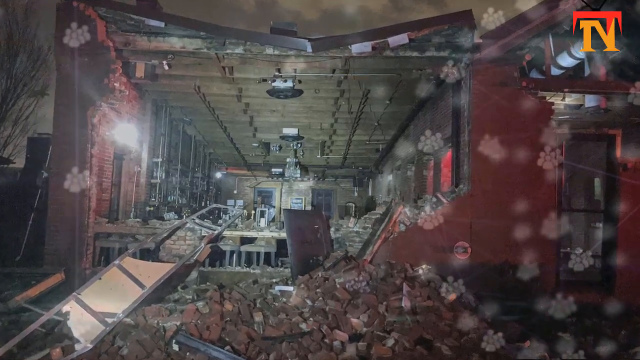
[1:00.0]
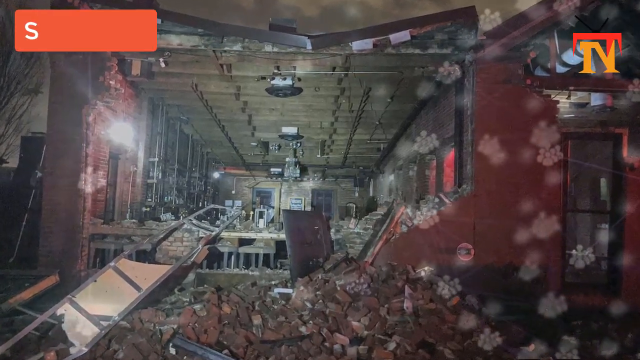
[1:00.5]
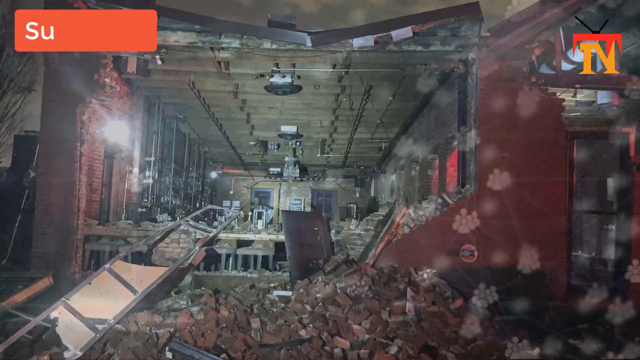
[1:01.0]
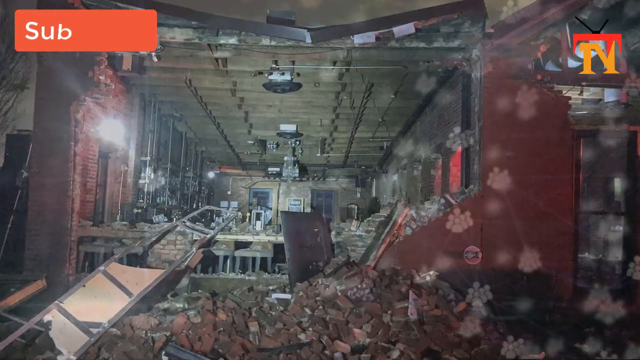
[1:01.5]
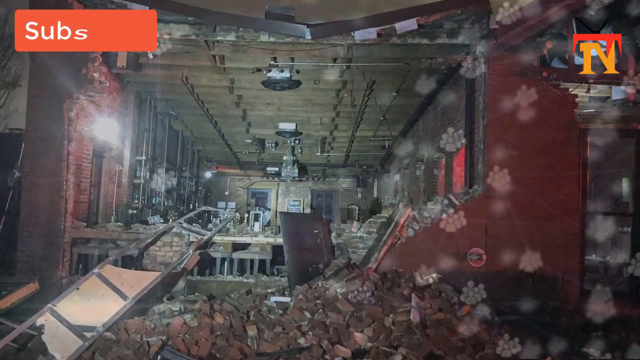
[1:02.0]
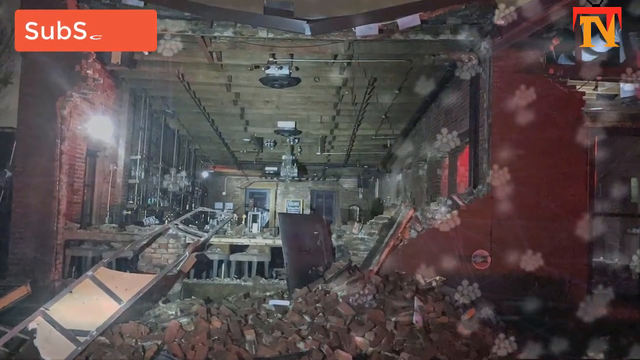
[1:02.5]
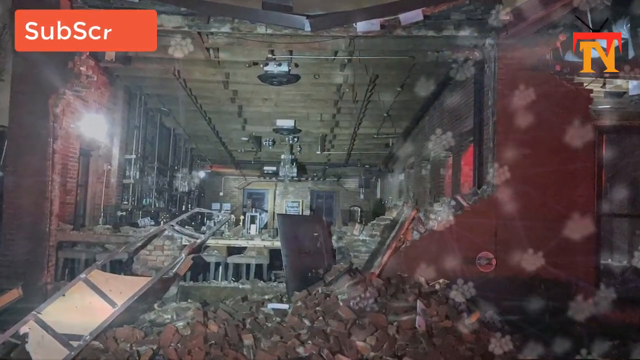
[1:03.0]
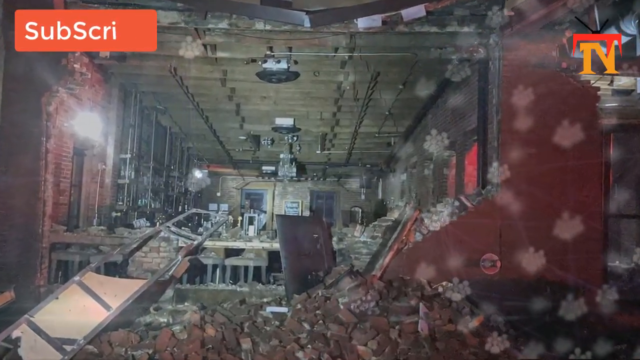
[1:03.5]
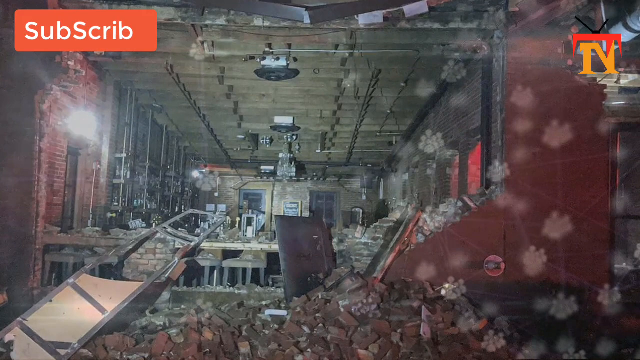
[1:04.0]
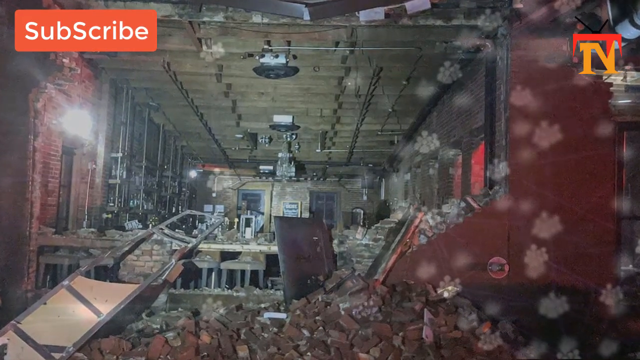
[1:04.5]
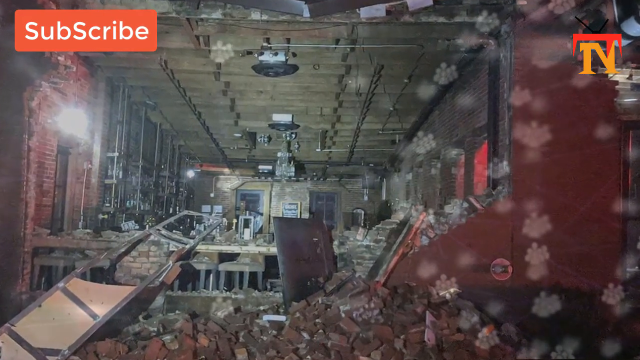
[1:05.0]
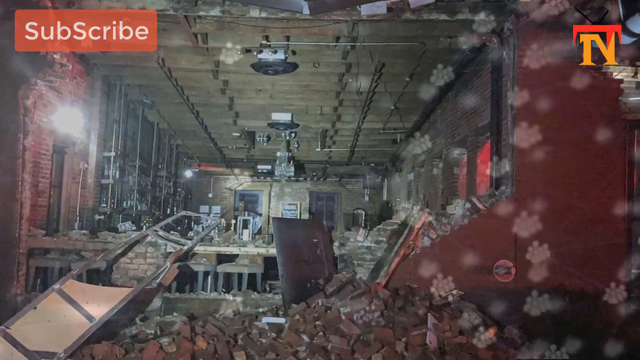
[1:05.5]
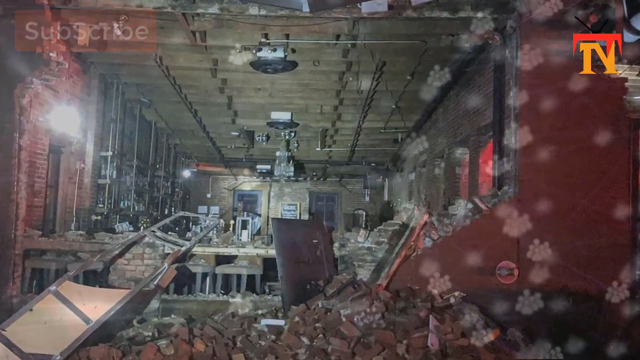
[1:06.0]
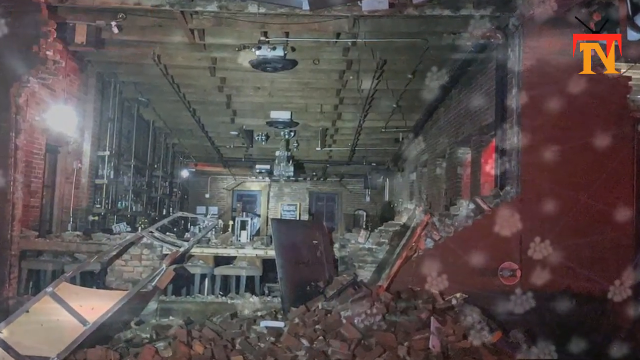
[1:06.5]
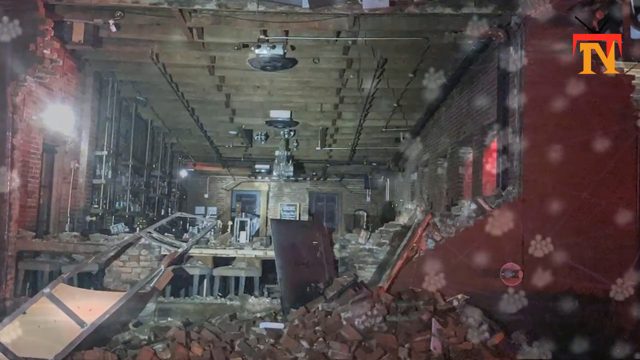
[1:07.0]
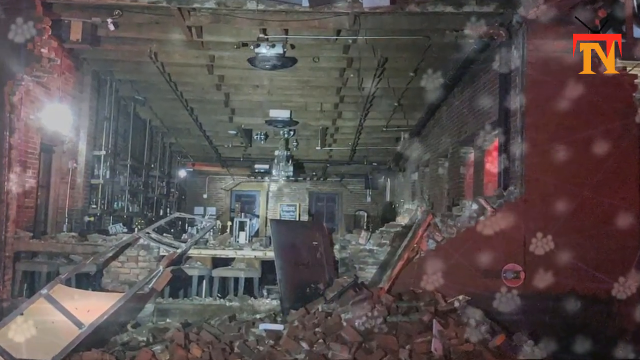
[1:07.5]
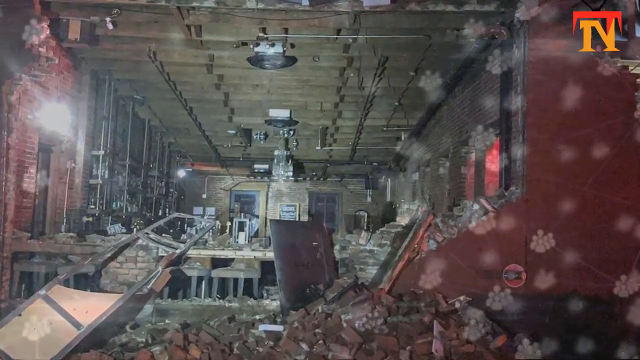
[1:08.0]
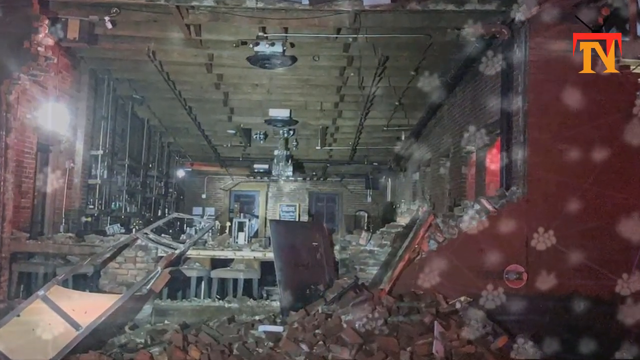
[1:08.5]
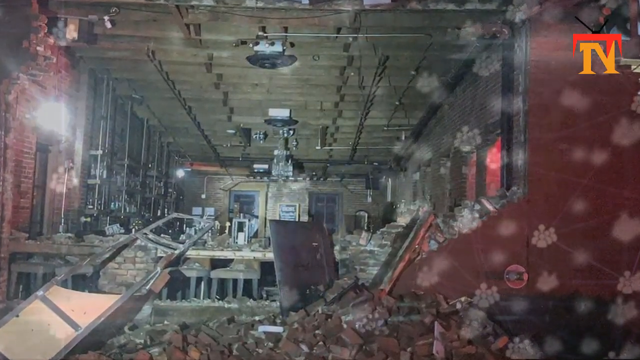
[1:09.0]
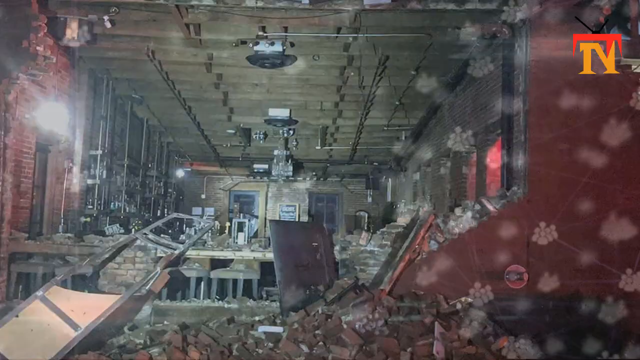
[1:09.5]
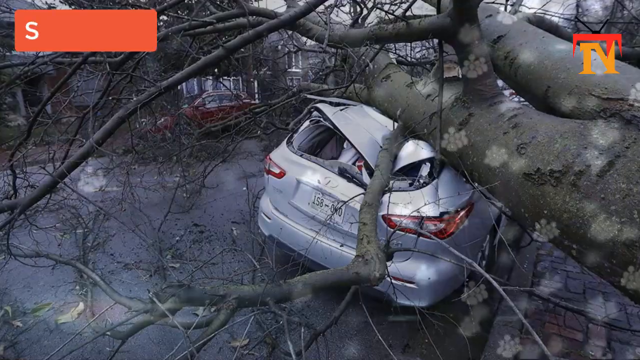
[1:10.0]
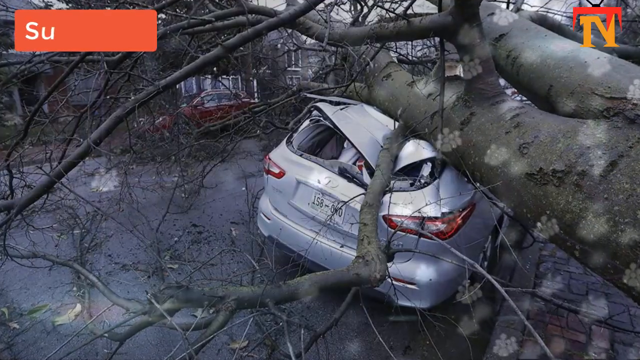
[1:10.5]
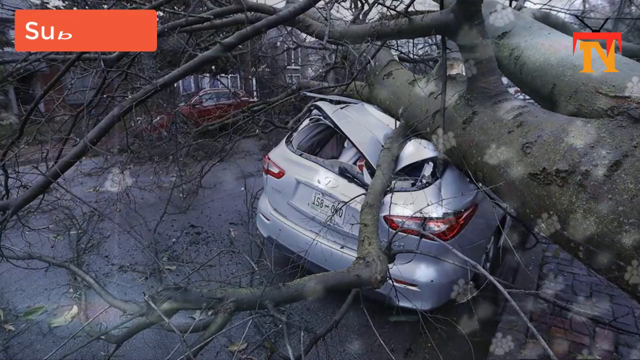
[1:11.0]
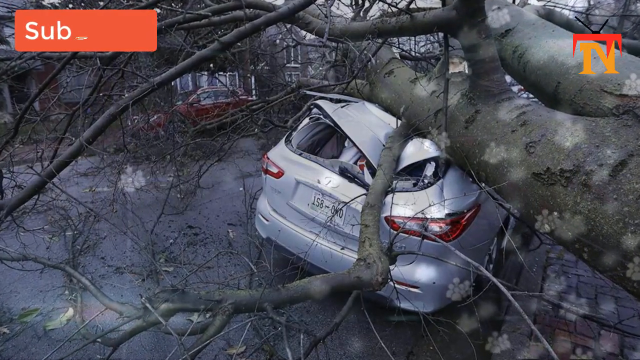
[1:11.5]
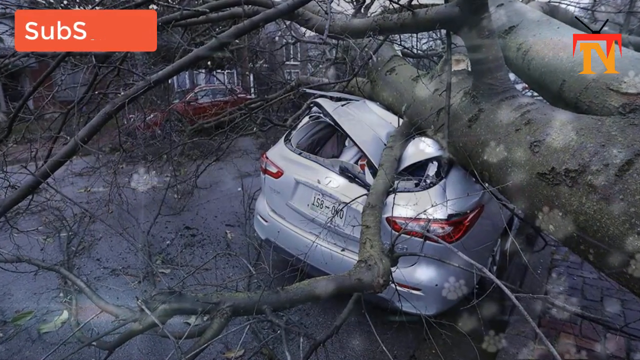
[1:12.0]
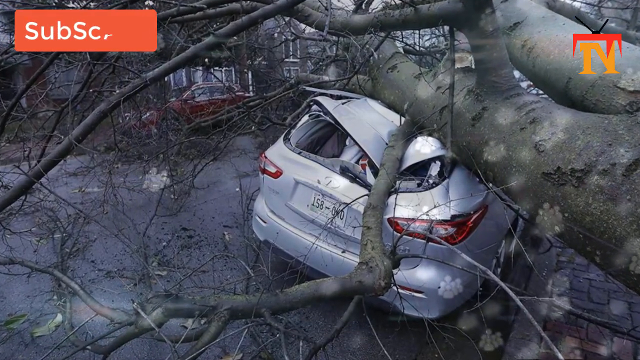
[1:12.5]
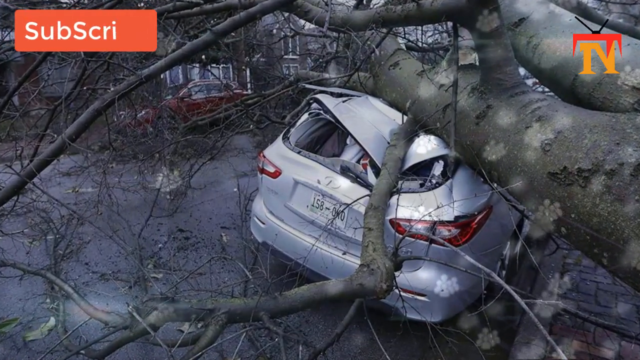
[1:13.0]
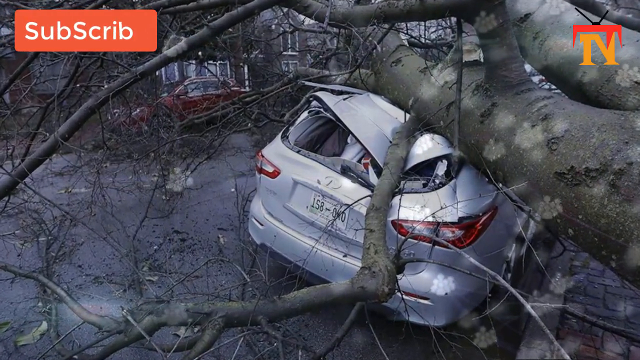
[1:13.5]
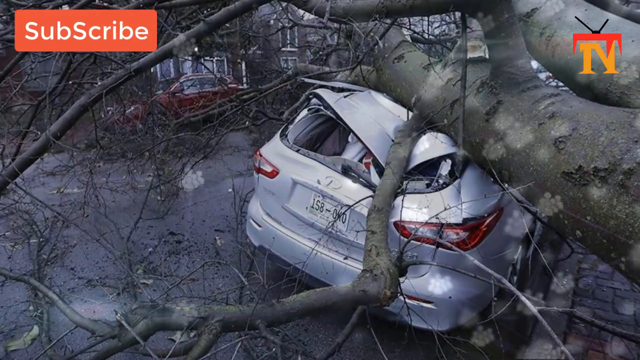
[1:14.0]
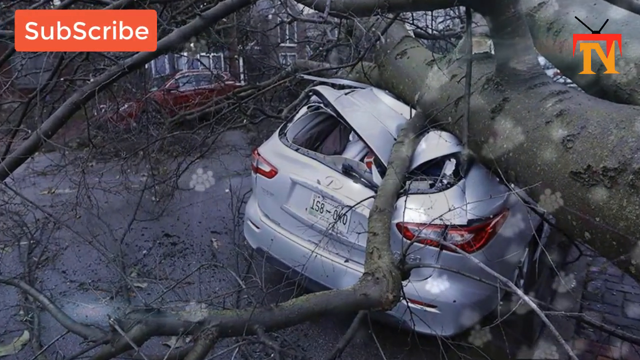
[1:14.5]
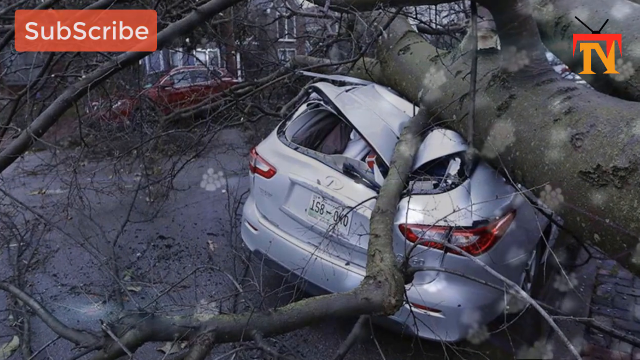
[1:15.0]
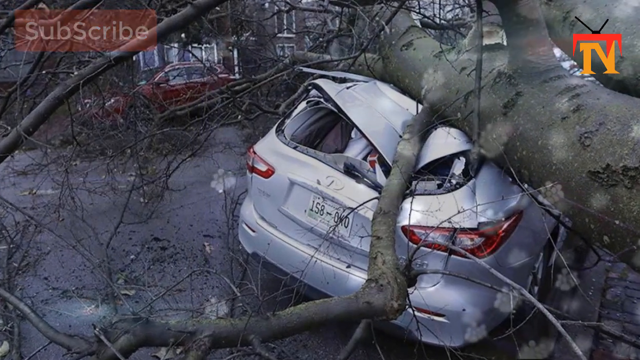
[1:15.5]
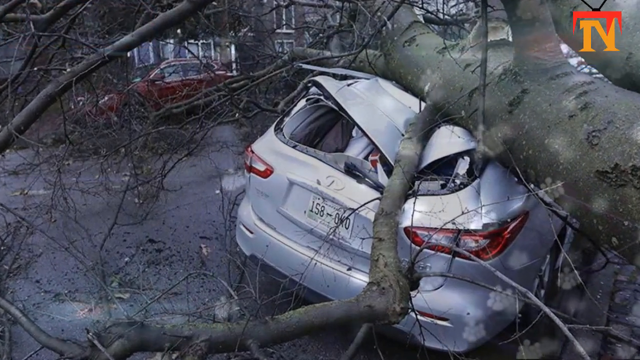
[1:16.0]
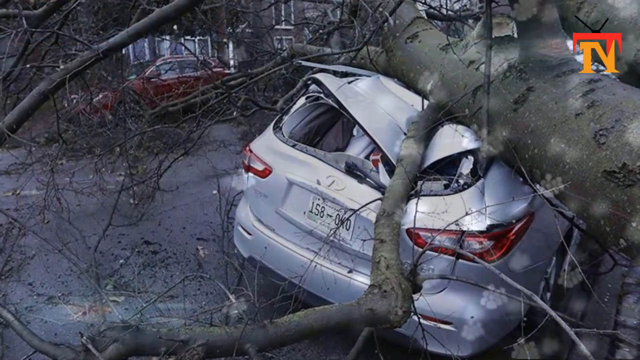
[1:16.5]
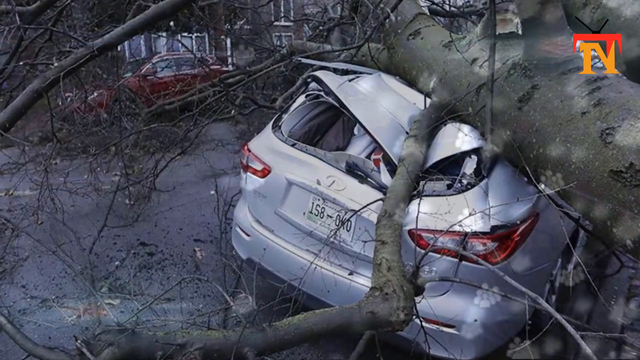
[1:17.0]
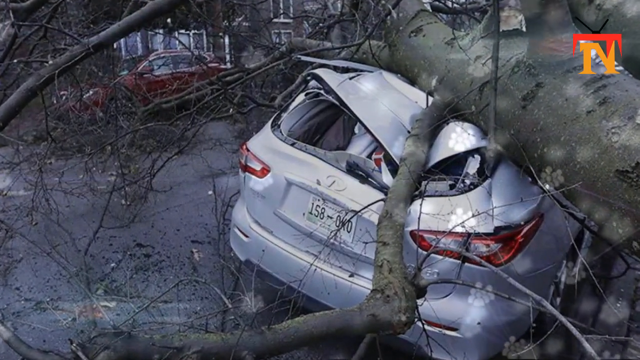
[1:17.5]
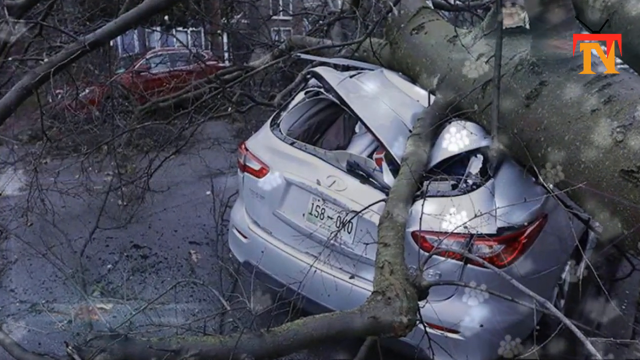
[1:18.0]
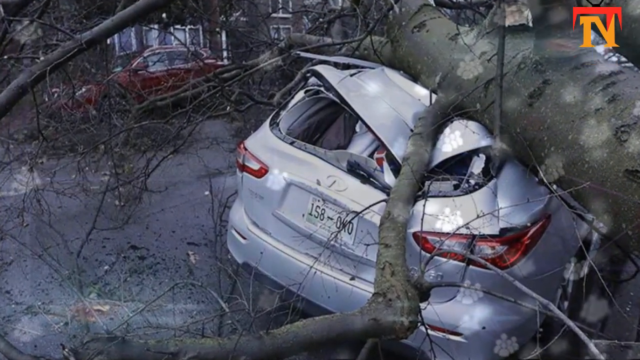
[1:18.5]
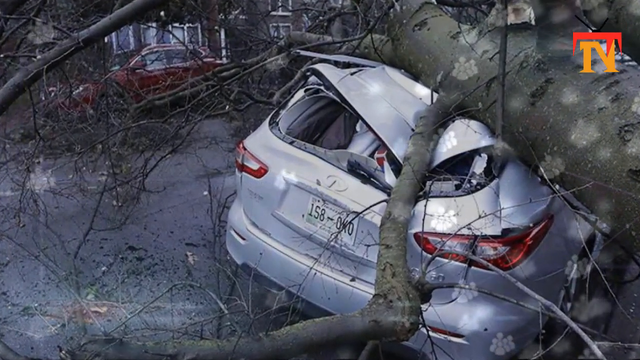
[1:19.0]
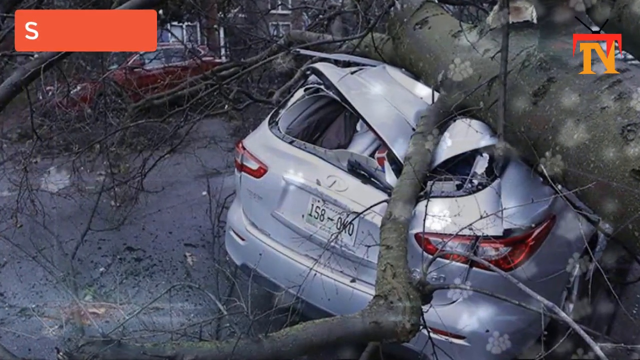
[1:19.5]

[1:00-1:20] An image shows a building with a wall torn completely off, leaving the inside of the room fully exposed, with dark clouds visible above. Wreckage is spilled out in front of where the wall was torn down. The camera slowly zooms into the center. The image then transitions to a cul-de-sac with houses in the background, where a giant fallen tree lies on top of a silver sedan parked on the street. A red car in the top left is parked along a curb. The tree apparently fell because of a storm. Like the previous images, this one is zoomed into at the center of the screen.